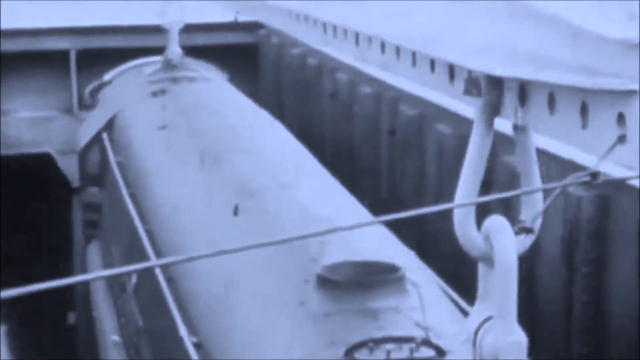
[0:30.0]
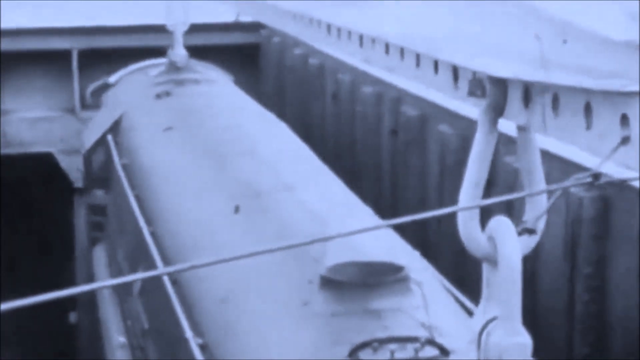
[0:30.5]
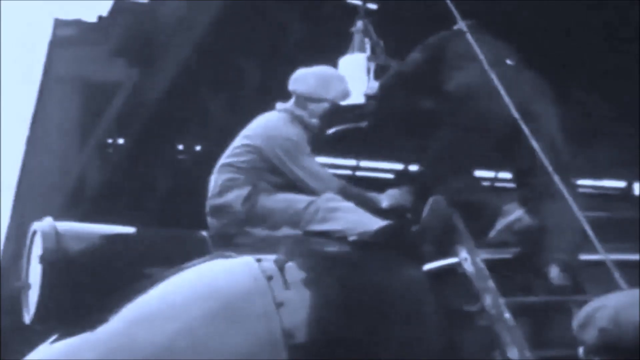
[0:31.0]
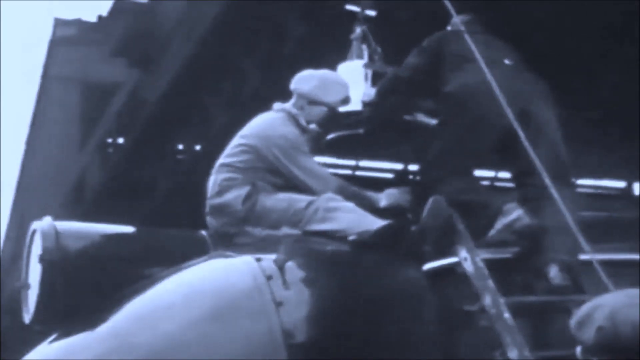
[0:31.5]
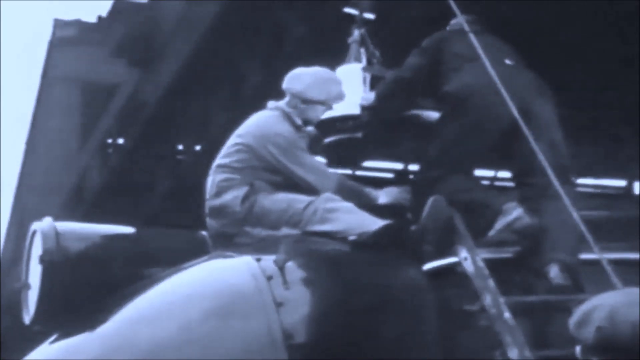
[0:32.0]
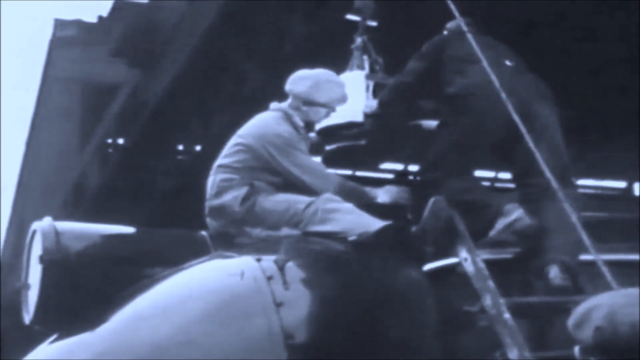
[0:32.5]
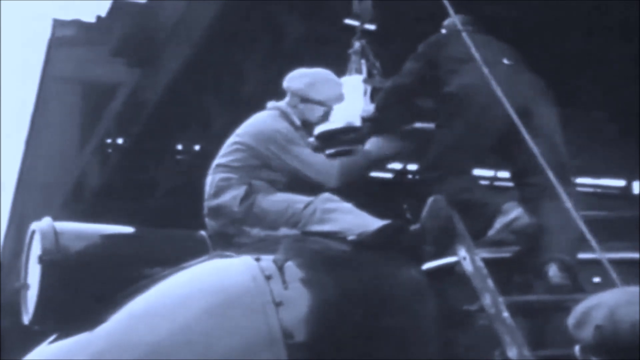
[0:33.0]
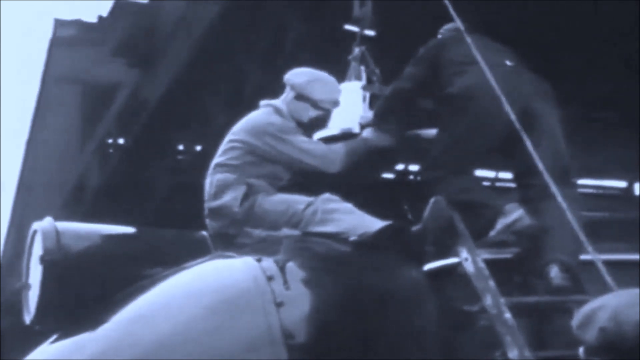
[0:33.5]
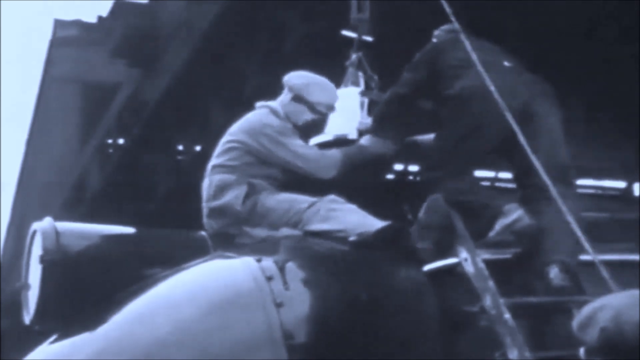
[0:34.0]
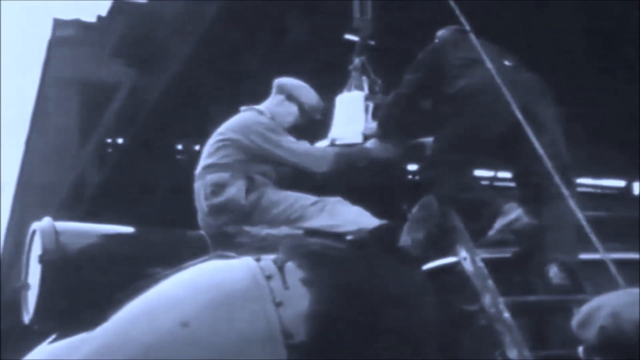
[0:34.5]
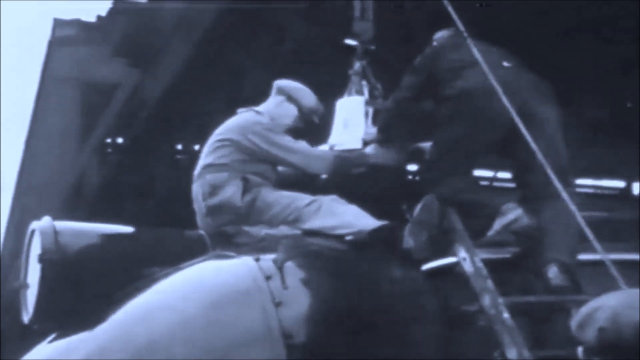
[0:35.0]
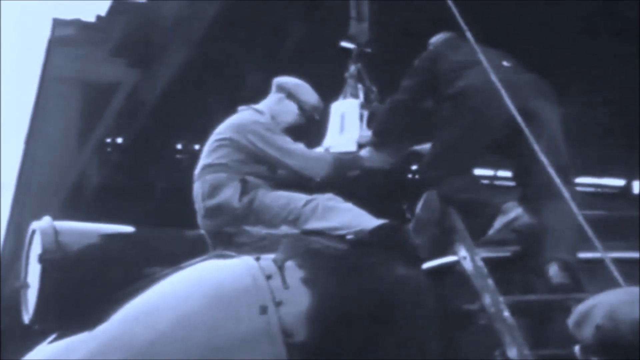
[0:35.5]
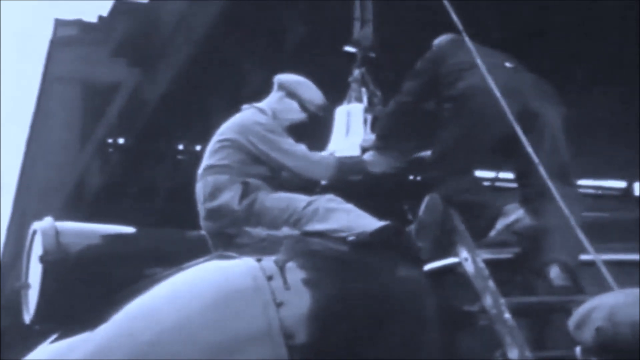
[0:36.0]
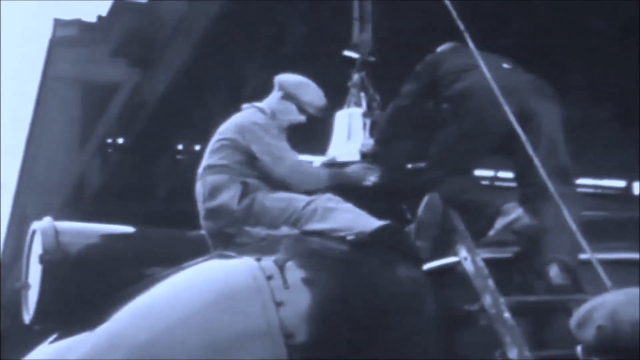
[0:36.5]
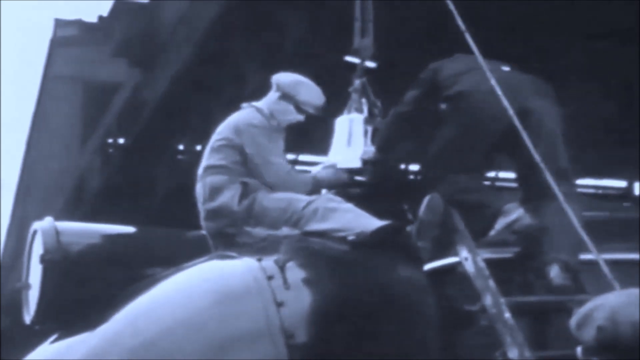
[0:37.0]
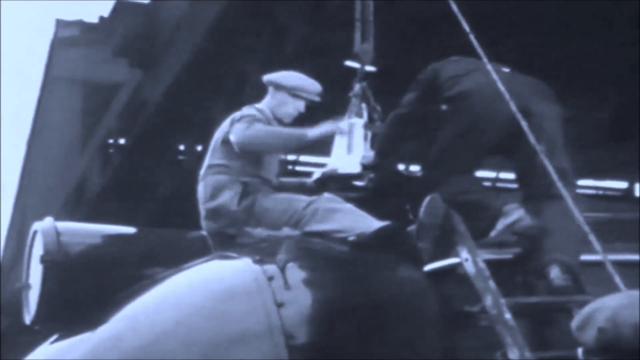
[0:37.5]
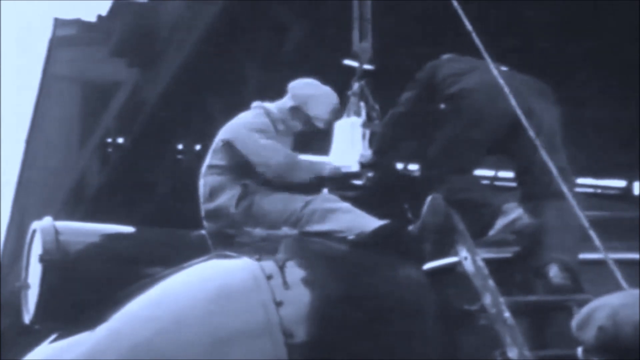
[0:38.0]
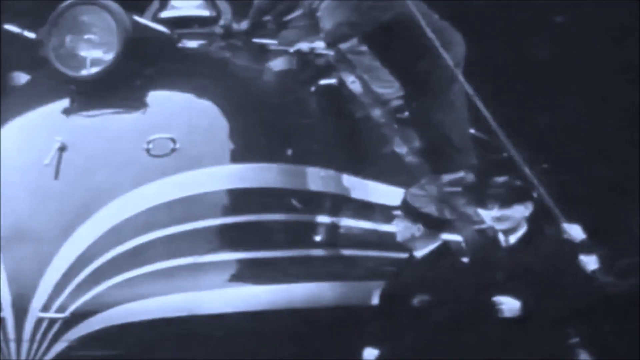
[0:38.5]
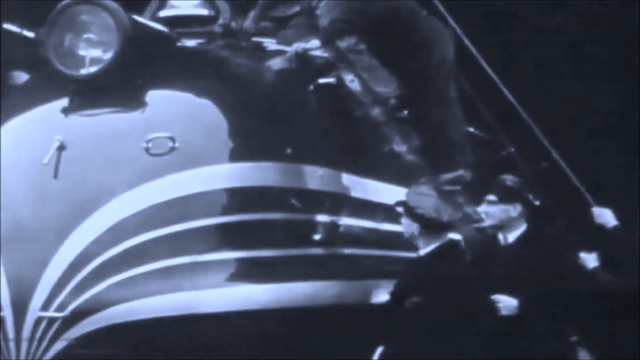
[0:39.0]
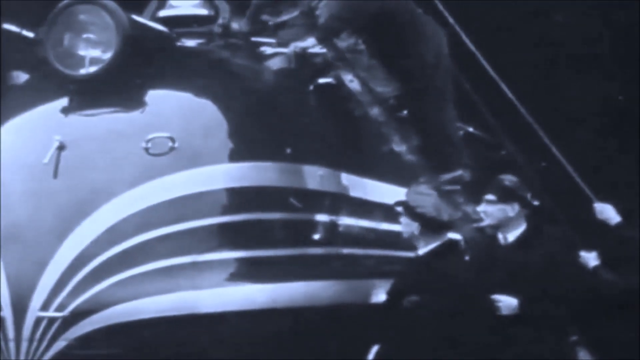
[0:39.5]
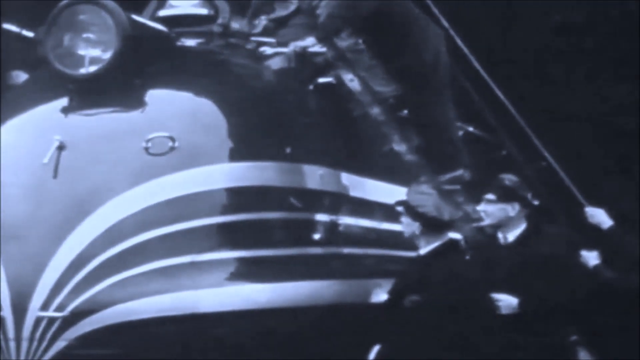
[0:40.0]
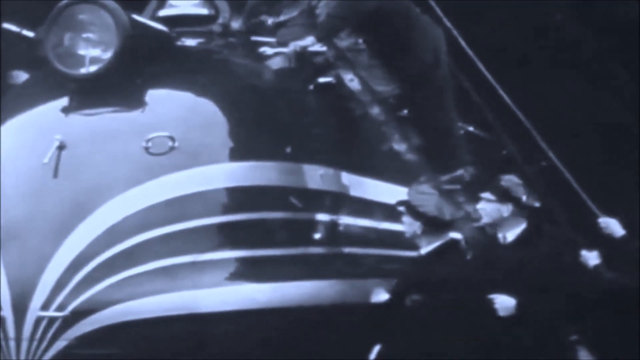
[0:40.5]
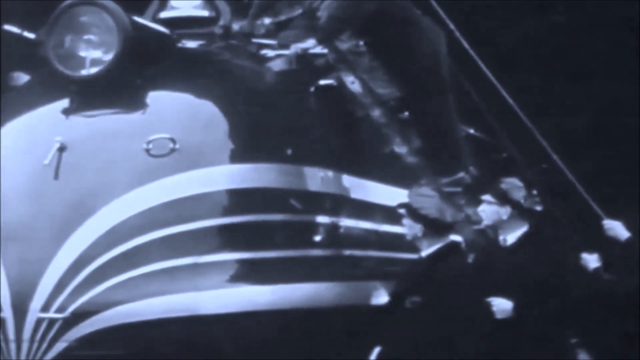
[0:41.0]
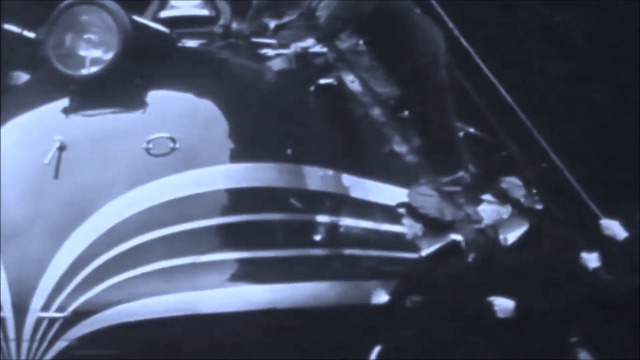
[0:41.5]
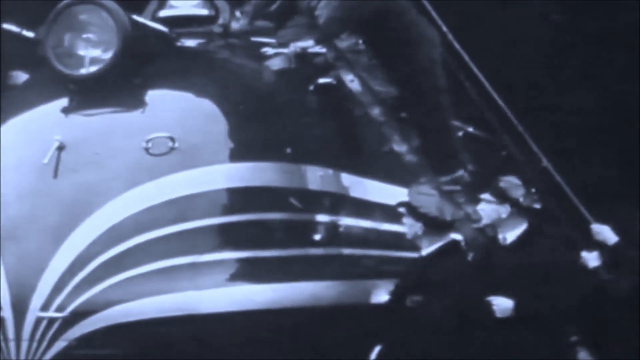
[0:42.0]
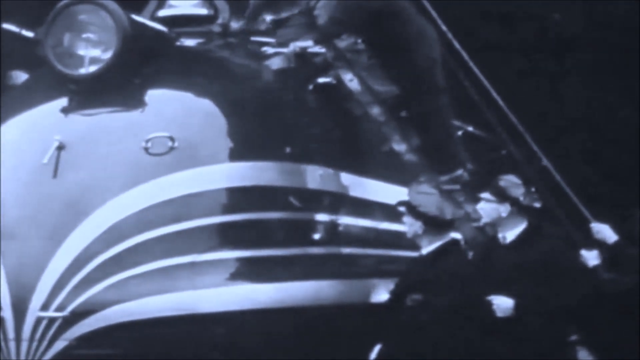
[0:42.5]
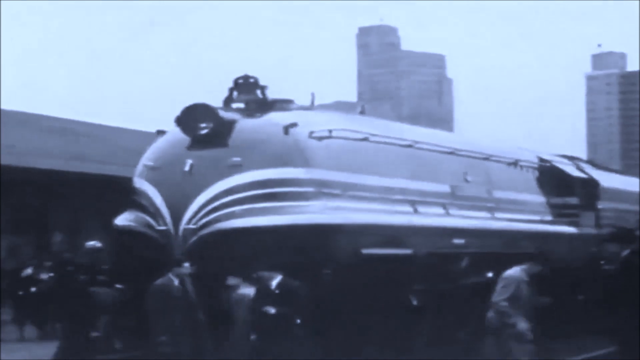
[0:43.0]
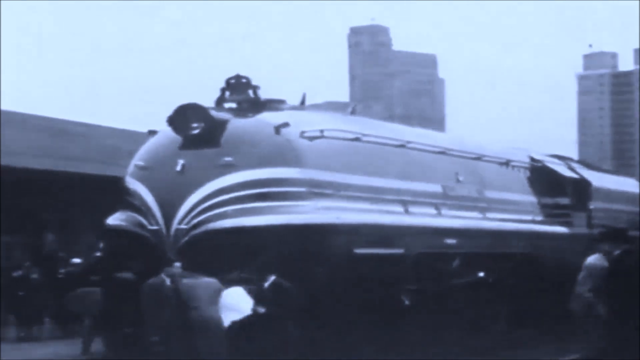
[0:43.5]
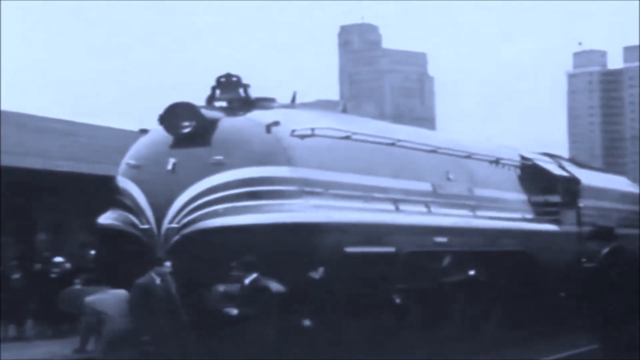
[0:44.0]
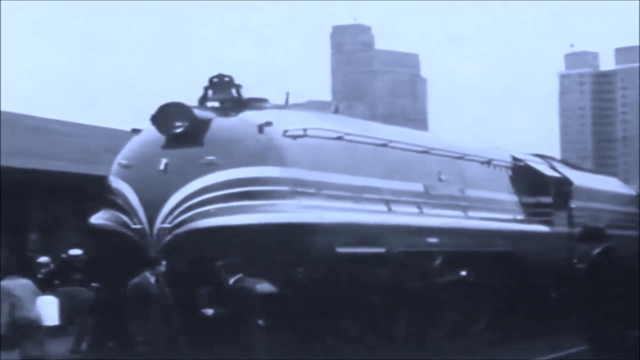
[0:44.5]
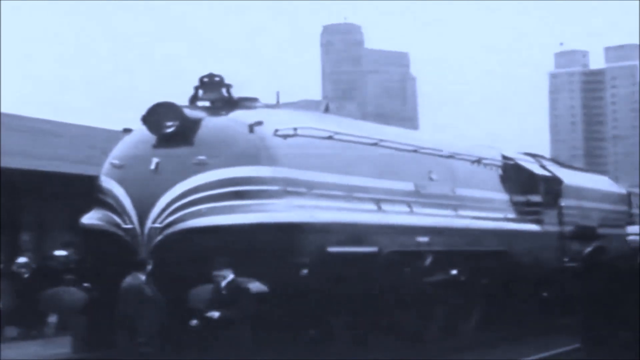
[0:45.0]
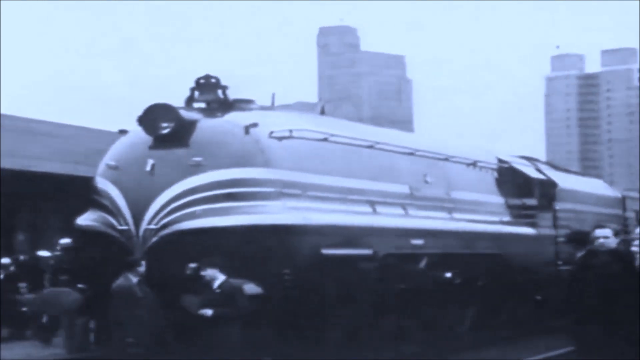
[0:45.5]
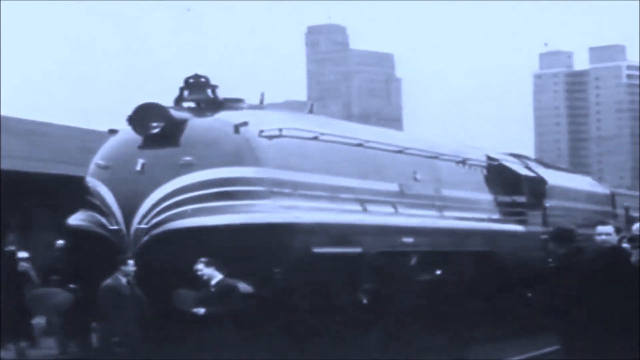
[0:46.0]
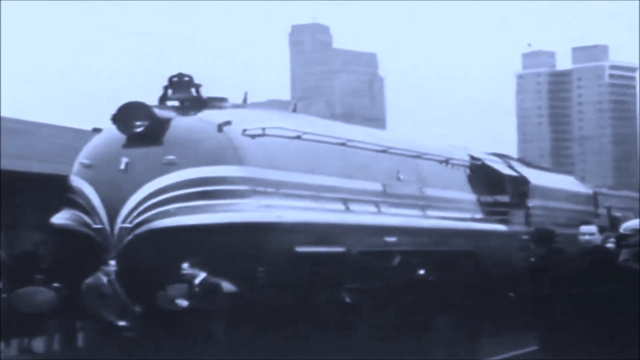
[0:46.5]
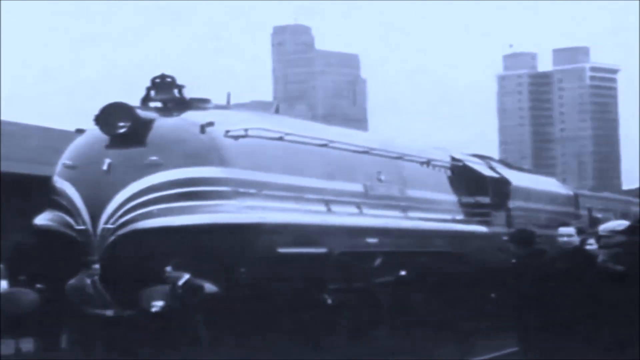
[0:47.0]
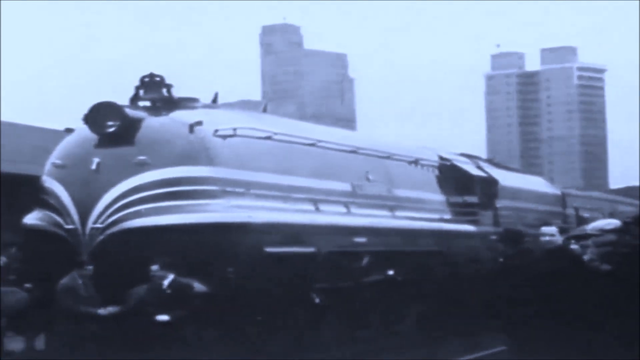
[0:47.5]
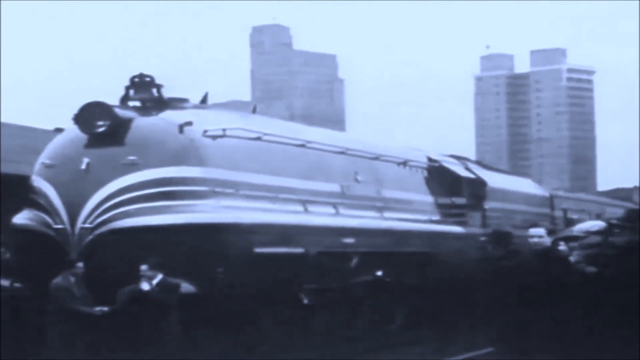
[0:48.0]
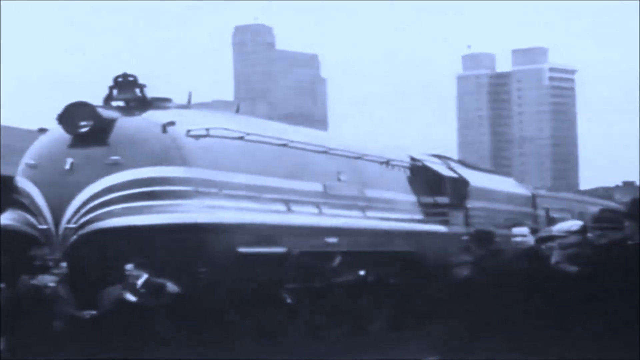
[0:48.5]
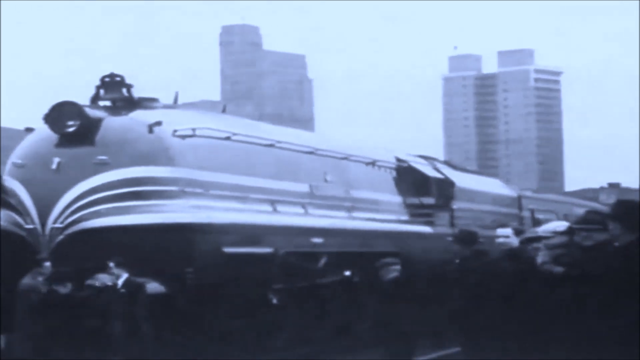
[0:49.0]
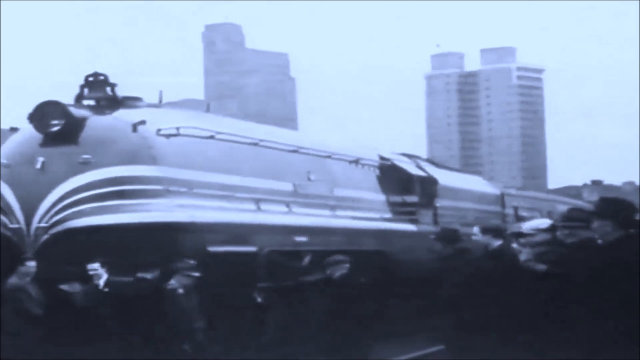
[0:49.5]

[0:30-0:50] The train car has been lowered onto the railroad track. The pulley system at the top of the train is being disassembled, and some men sit on top of the train car putting the hatch back on. Other men polish the sides and front of the train as though cleaning it, apparently preparing it for departure. The images are still blurry and the men's faces cannot be seen well, though their actions are visible. The focus is on the top, front and side of the train; the surrounding building, the sign and the possible ship are not seen. The camera zooms in.